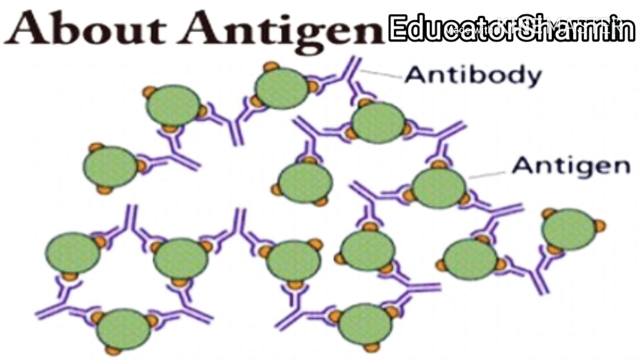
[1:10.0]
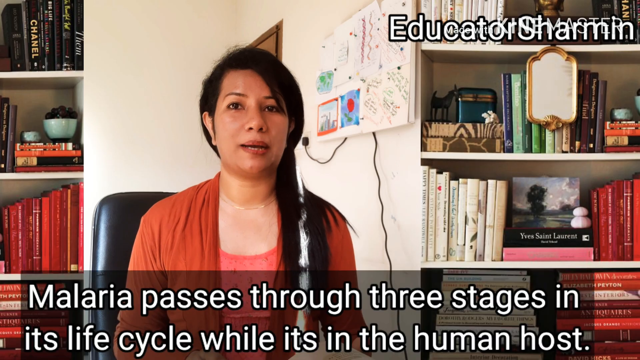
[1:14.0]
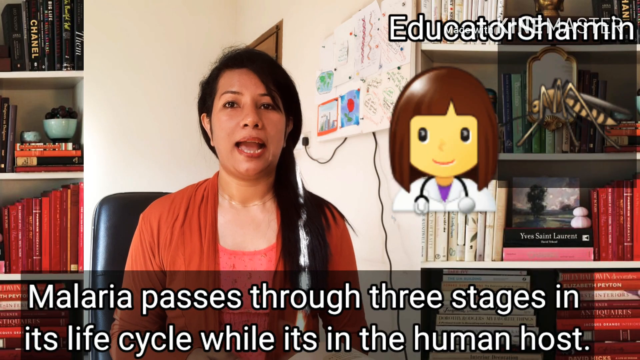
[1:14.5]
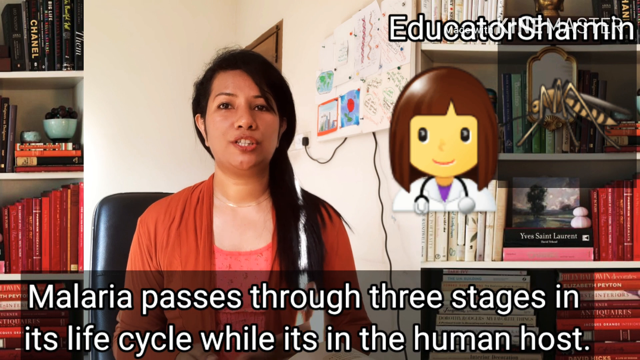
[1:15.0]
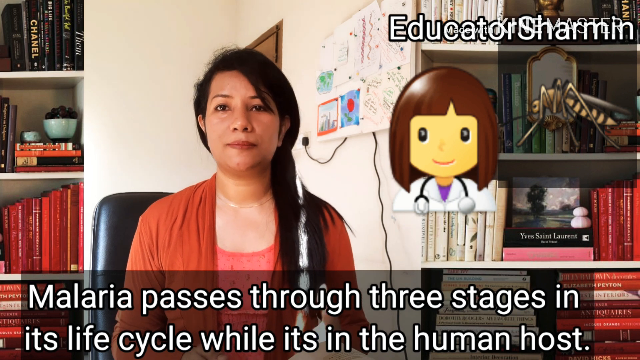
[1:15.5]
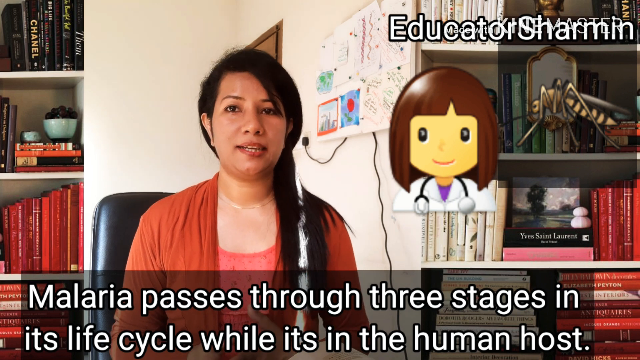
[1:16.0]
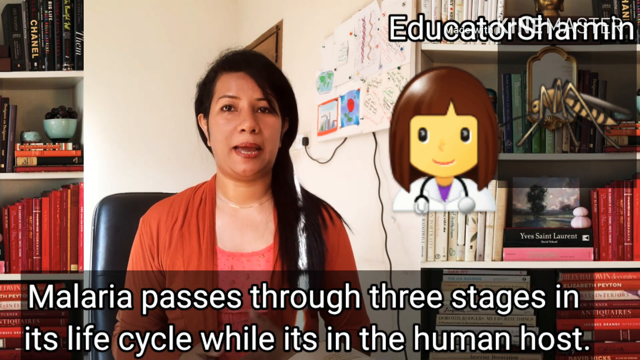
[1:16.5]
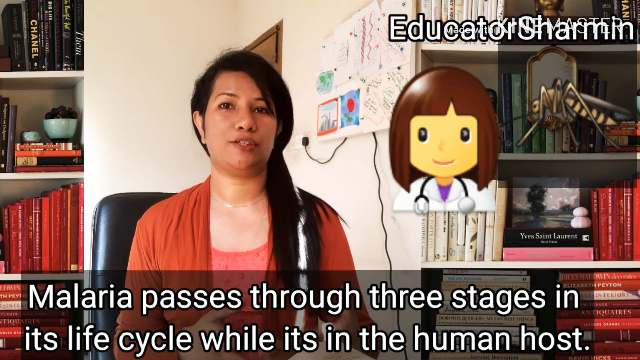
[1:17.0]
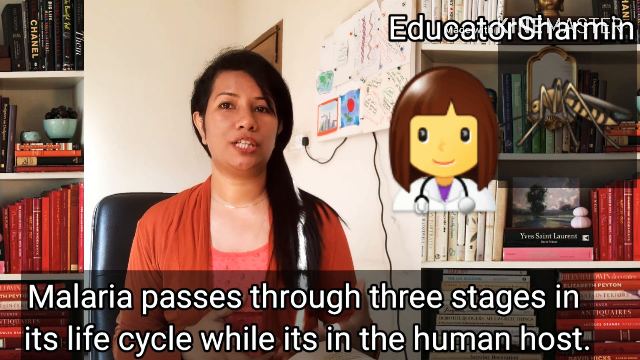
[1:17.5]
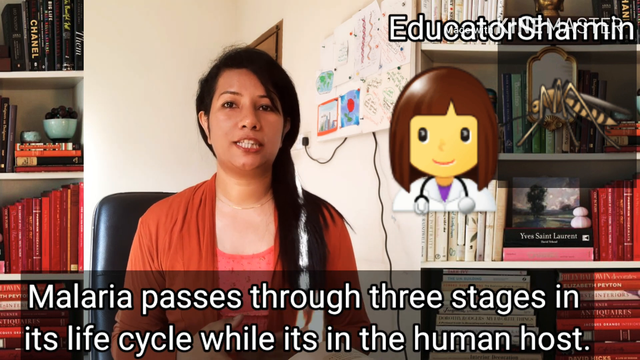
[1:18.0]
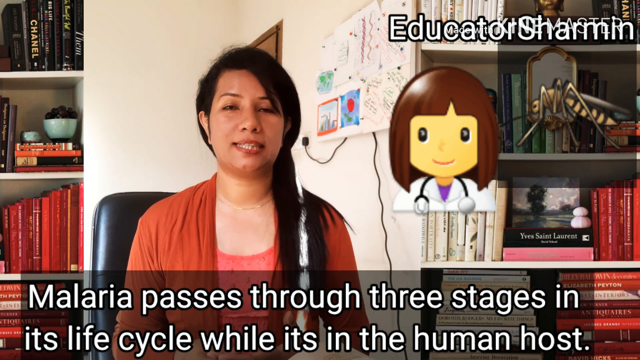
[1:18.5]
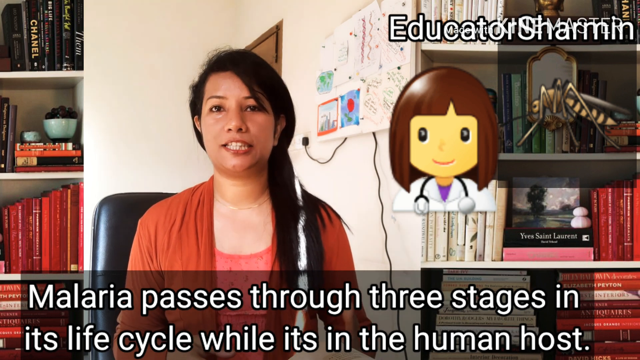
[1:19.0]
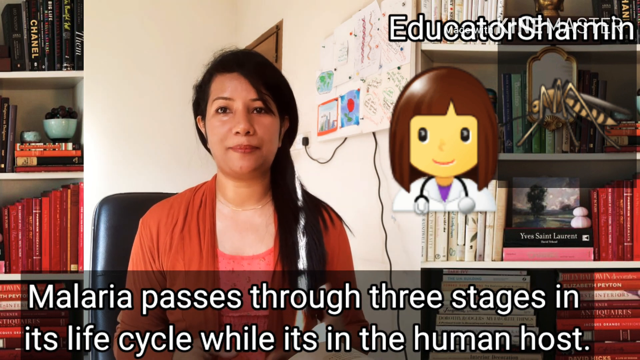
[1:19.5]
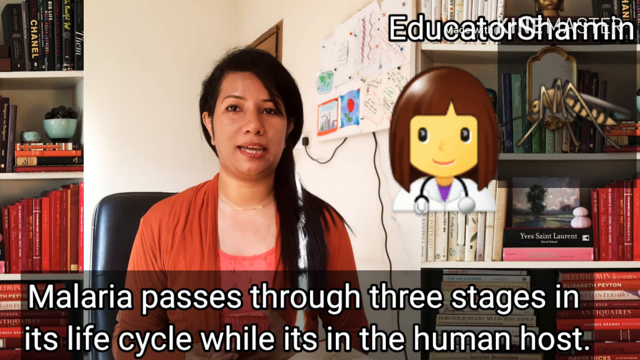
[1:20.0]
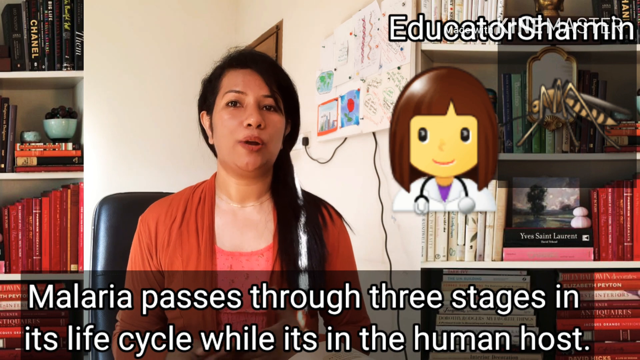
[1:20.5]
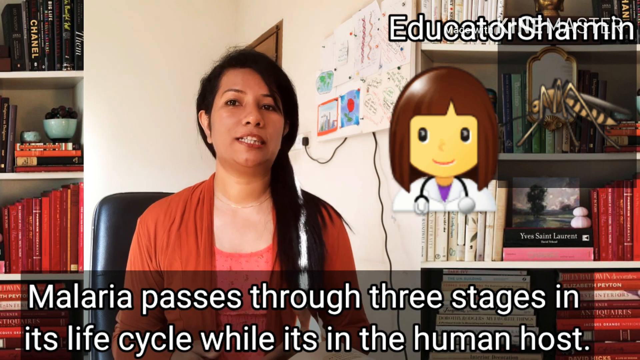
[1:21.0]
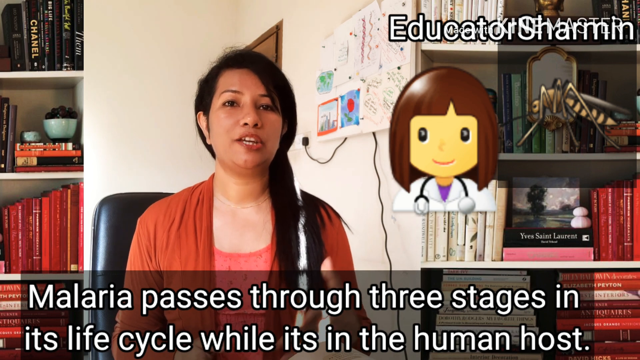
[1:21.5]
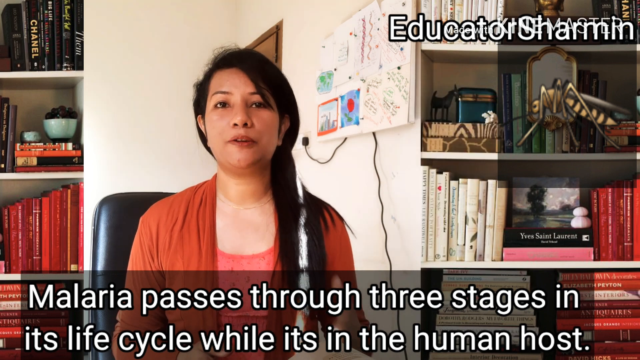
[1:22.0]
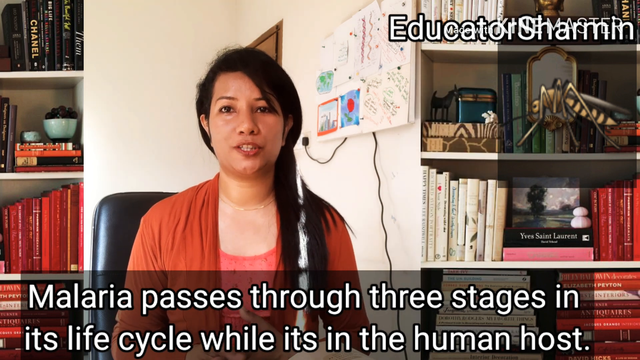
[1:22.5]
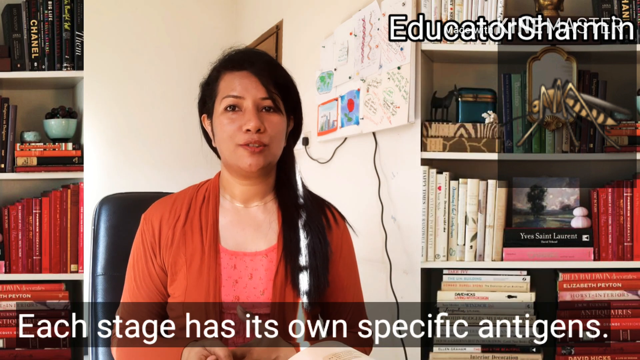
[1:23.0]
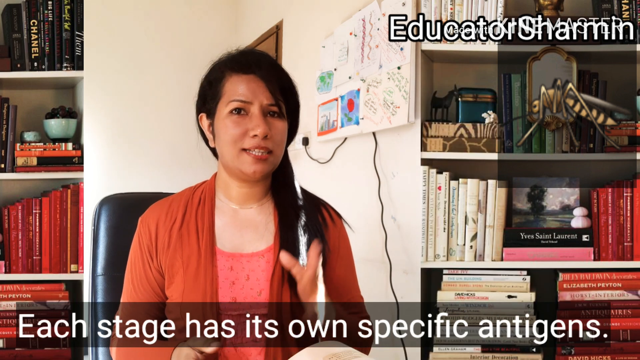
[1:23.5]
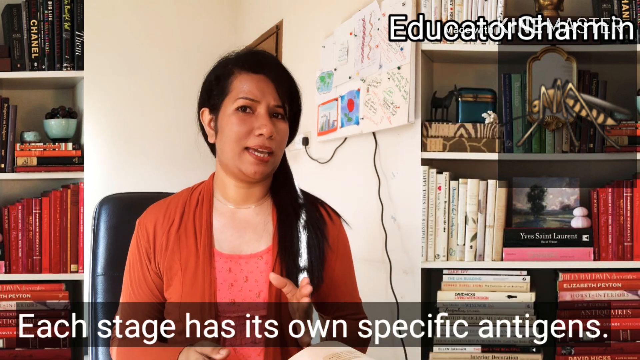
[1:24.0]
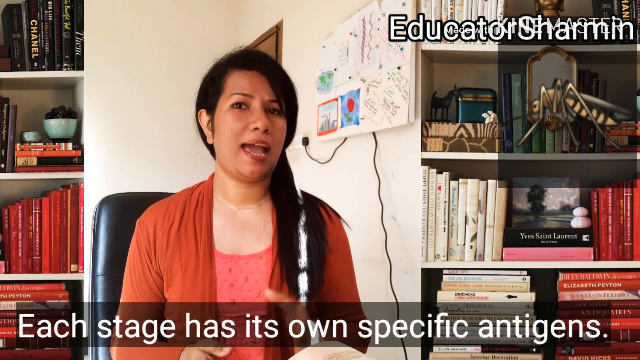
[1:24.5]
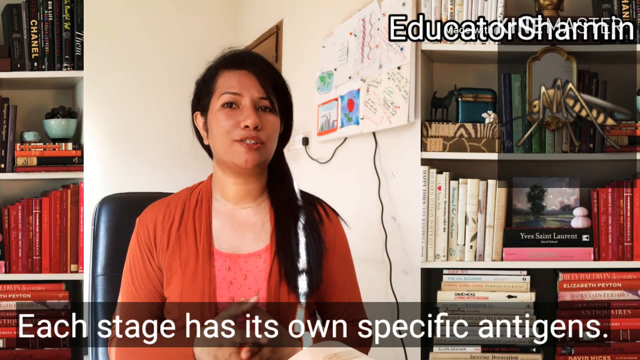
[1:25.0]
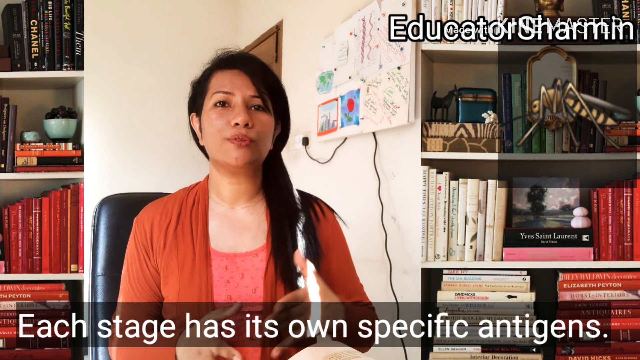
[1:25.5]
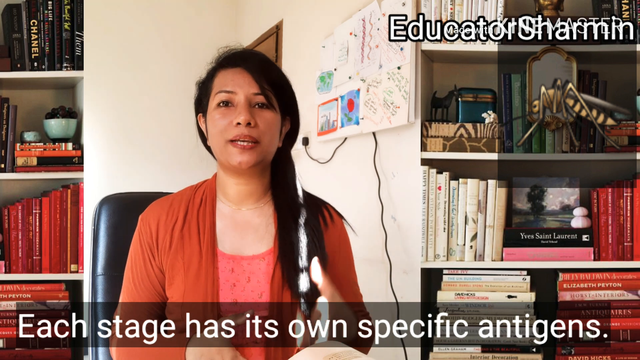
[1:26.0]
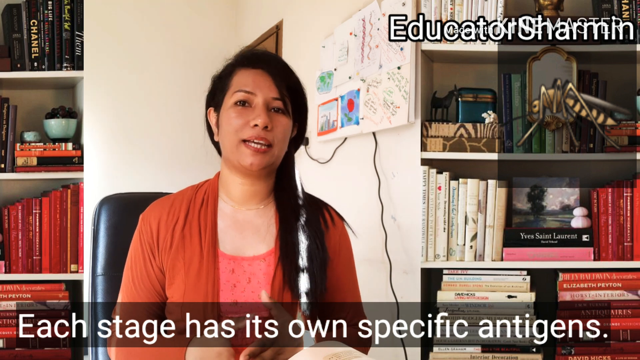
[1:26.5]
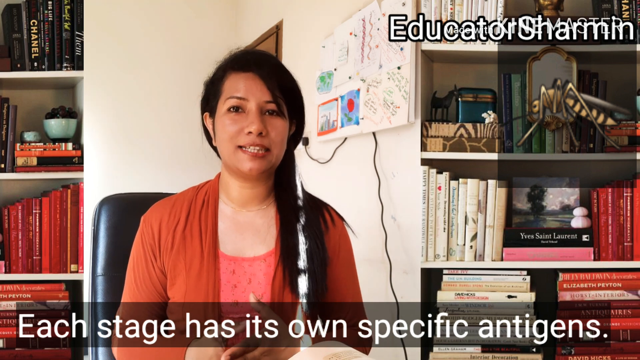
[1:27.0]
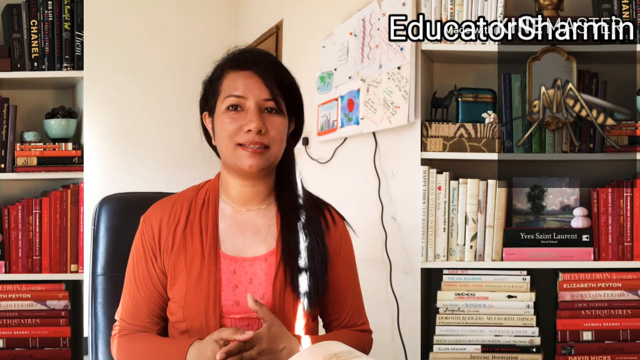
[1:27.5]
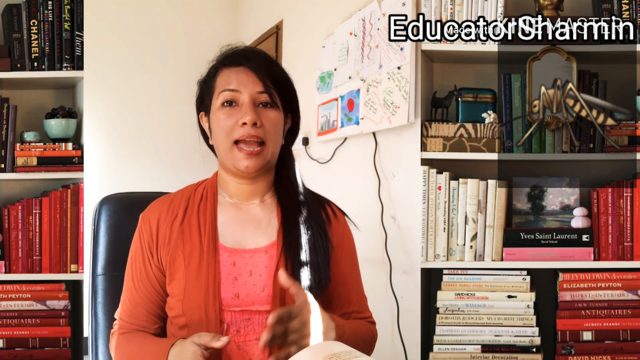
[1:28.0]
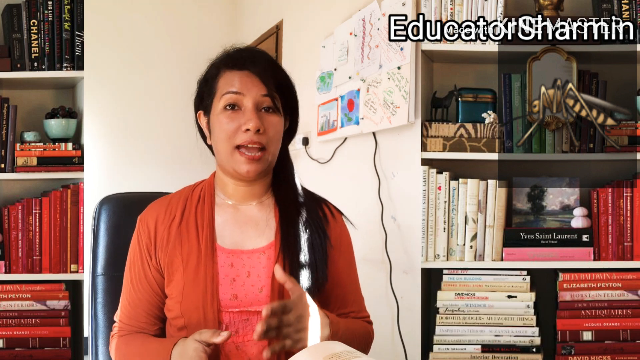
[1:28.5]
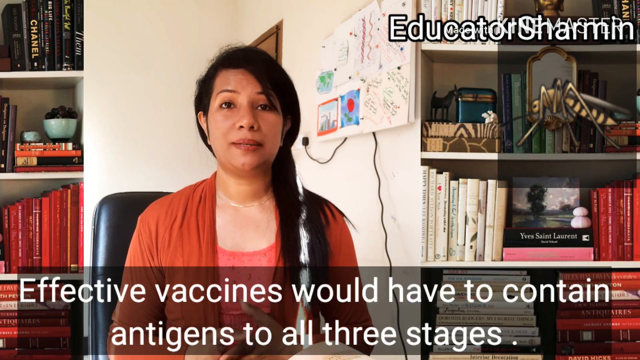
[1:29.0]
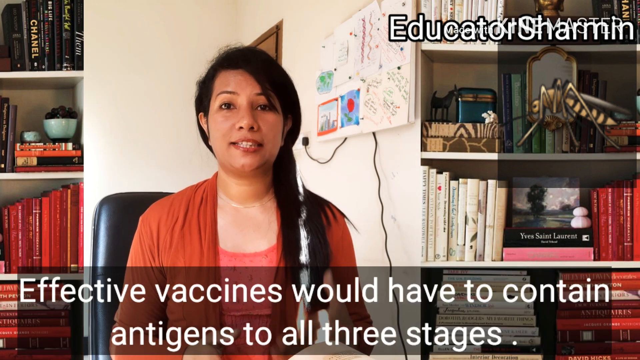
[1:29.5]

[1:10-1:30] A slide shows a picture of cells with text reading "About antigen, antibody, antigen." The video returns to the woman, who is talking. She sits in a black office chair in a large room with two bookshelves behind her, their books organized by color, and a whiteboard on the wall behind her. She wears a pink blouse with an orange jacket and has long, dark hair. Text appears reading "Malaria passes through three stages in its life cycle while it's in its human host," and an emoji of a female nurse is next to the woman. Another piece of information pops up reading "Each stage has its own specific antigens," followed by "Effective vaccines would have to contain antigens to all three stages."